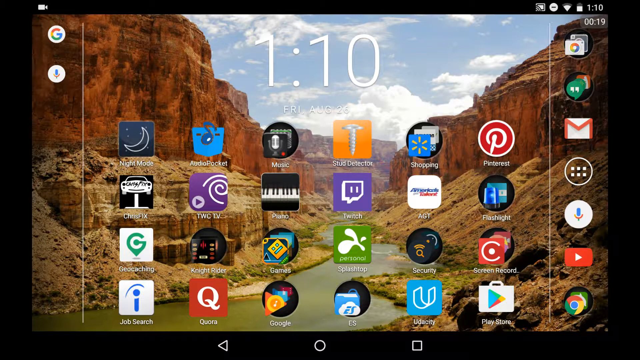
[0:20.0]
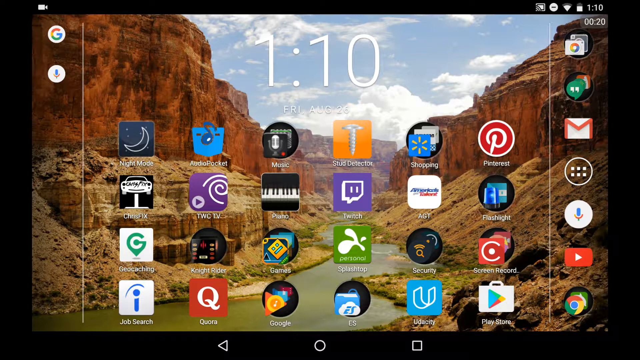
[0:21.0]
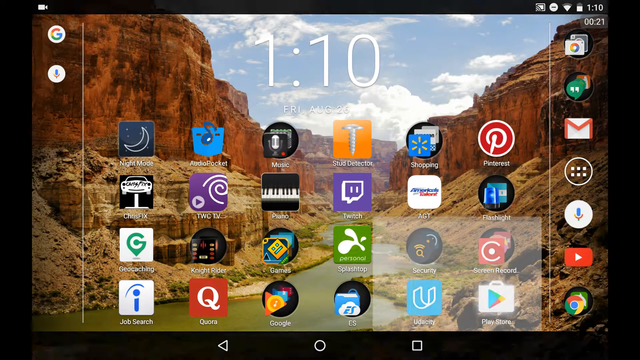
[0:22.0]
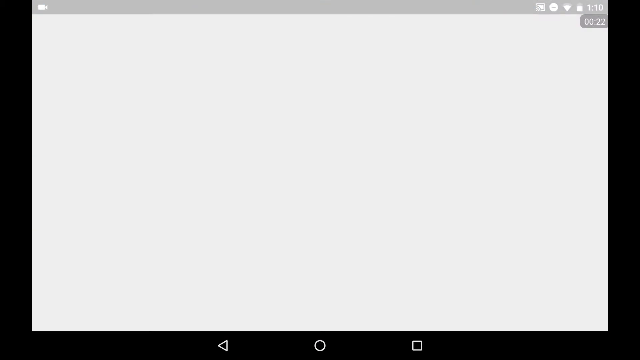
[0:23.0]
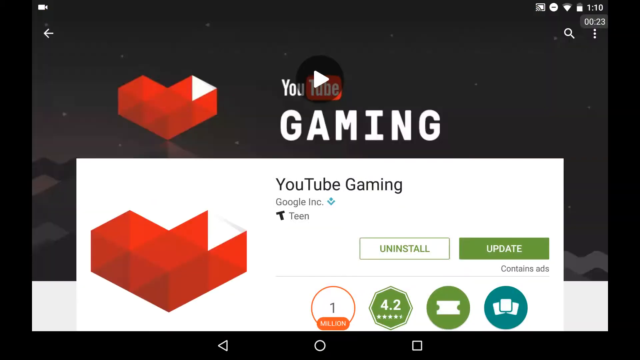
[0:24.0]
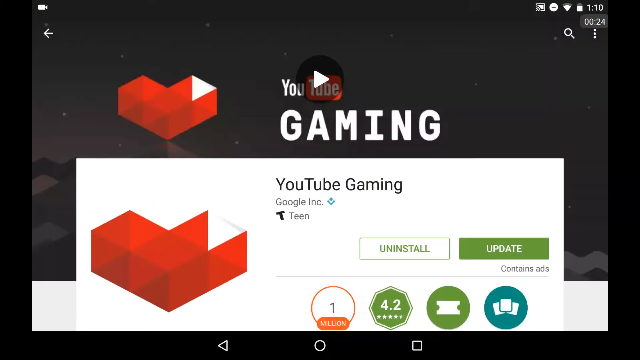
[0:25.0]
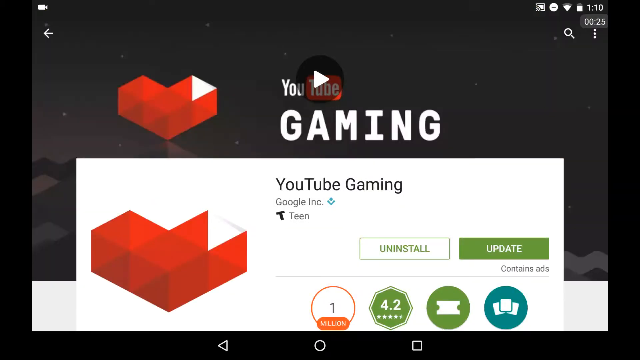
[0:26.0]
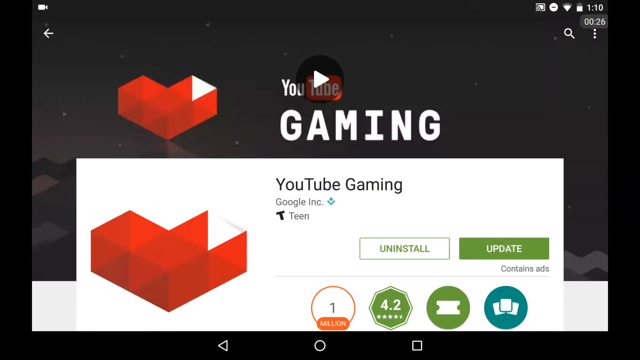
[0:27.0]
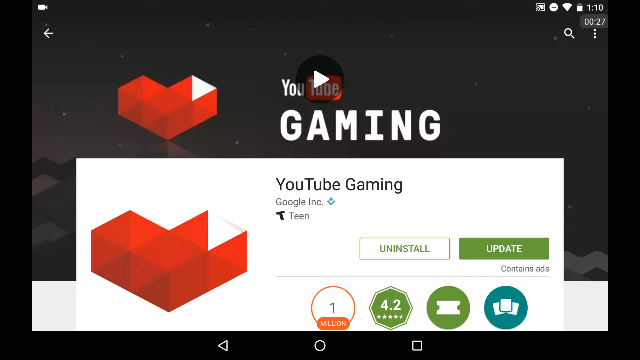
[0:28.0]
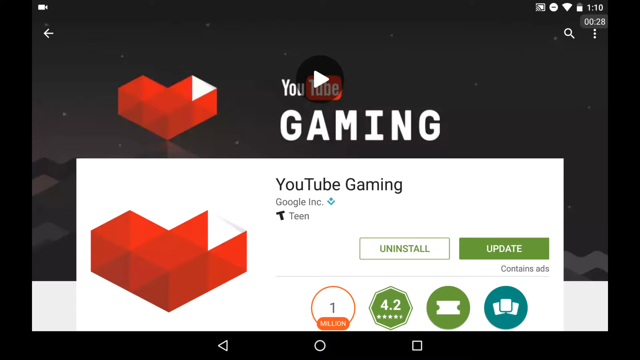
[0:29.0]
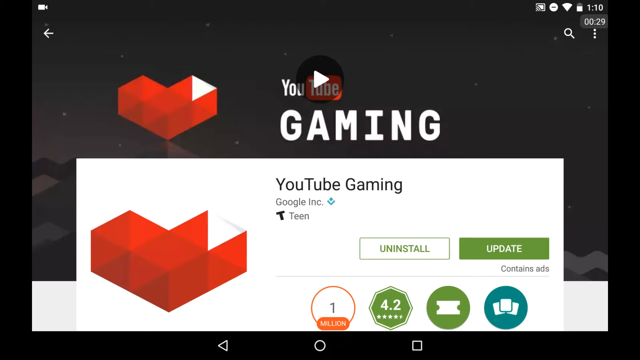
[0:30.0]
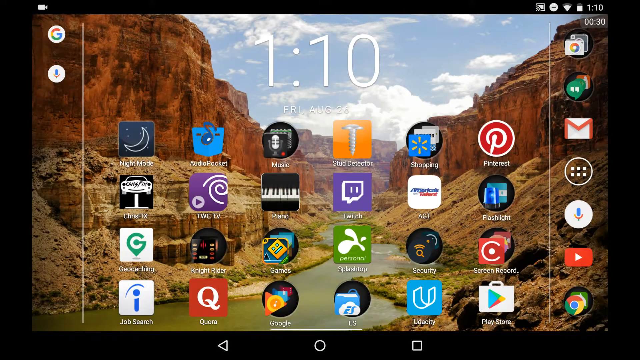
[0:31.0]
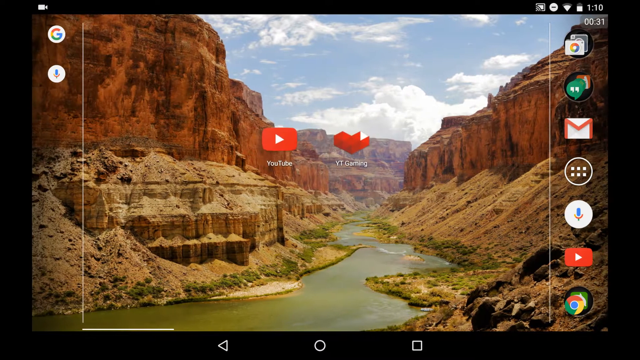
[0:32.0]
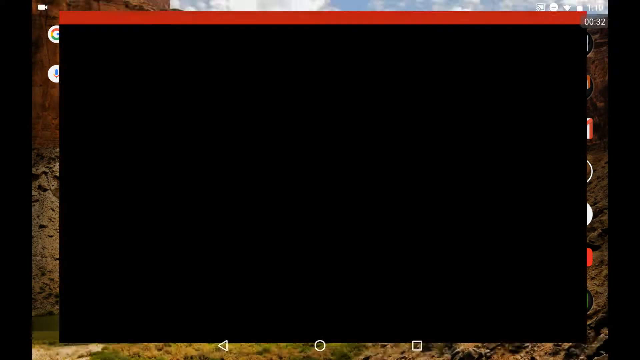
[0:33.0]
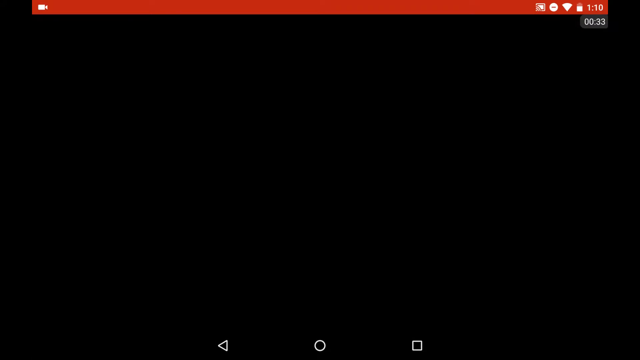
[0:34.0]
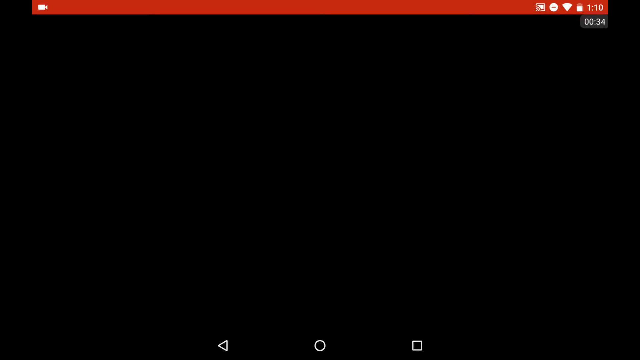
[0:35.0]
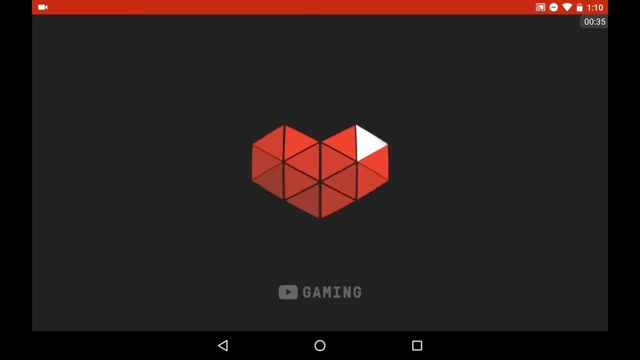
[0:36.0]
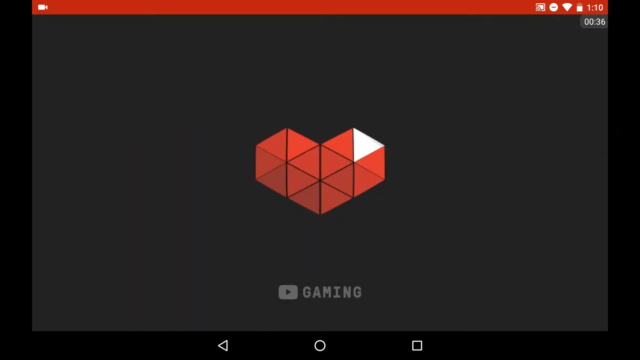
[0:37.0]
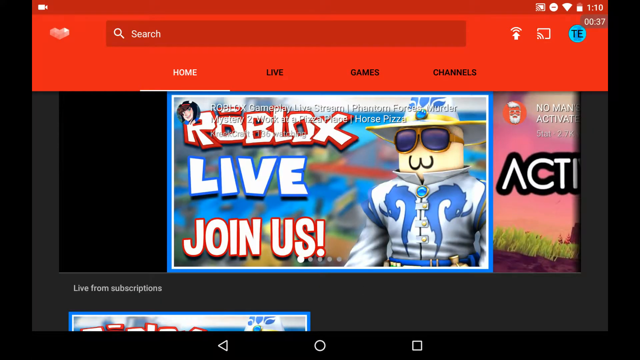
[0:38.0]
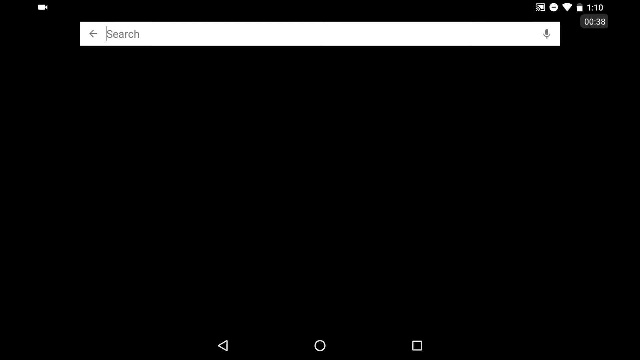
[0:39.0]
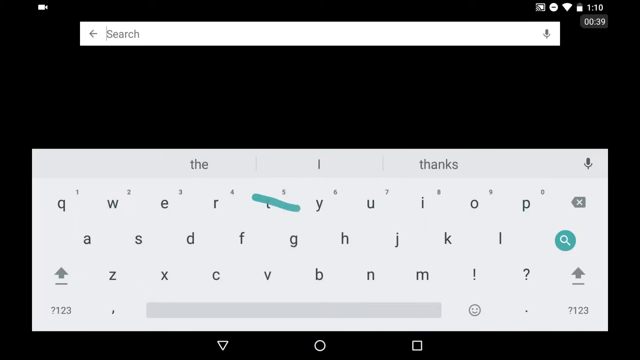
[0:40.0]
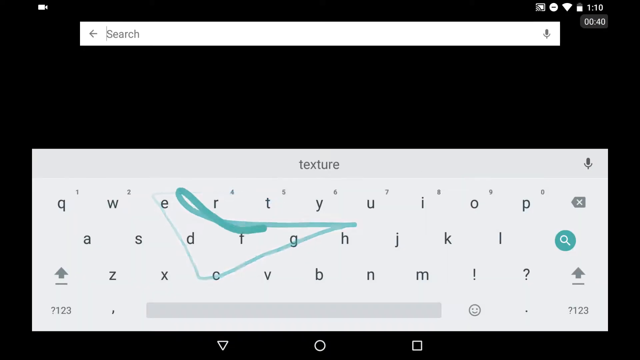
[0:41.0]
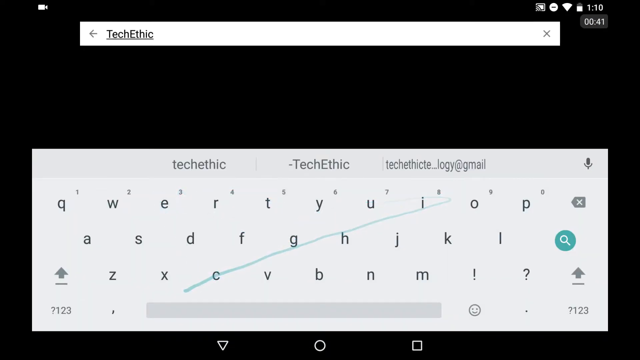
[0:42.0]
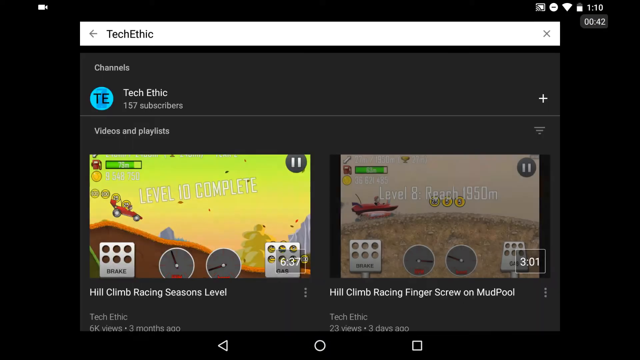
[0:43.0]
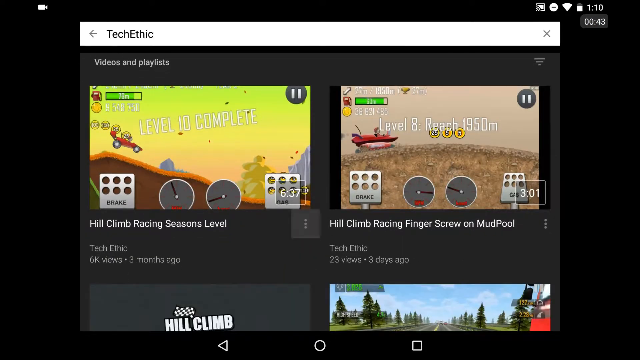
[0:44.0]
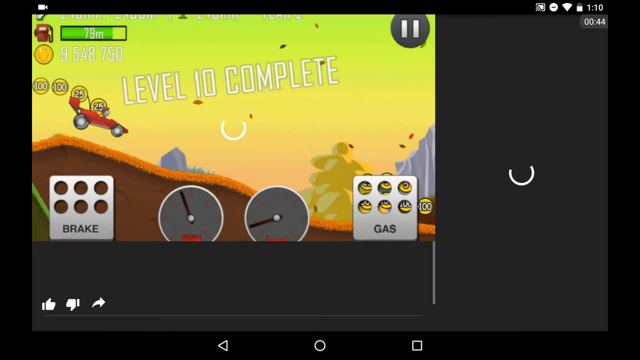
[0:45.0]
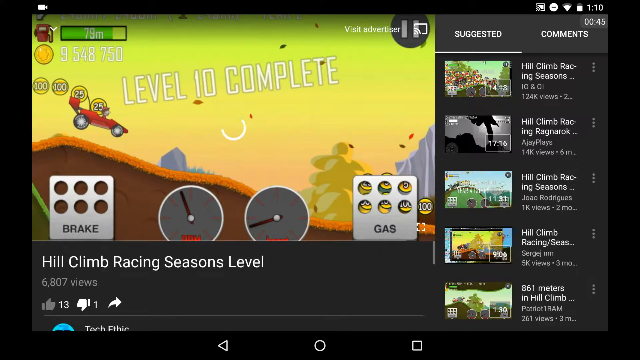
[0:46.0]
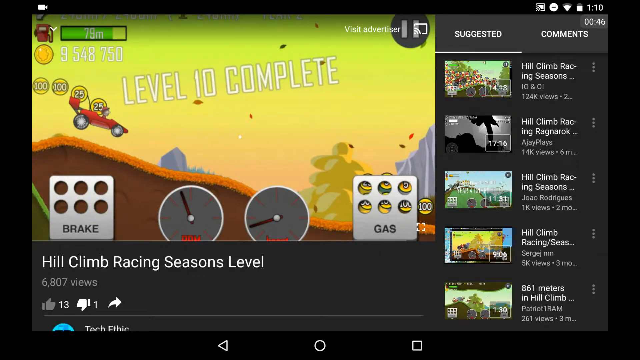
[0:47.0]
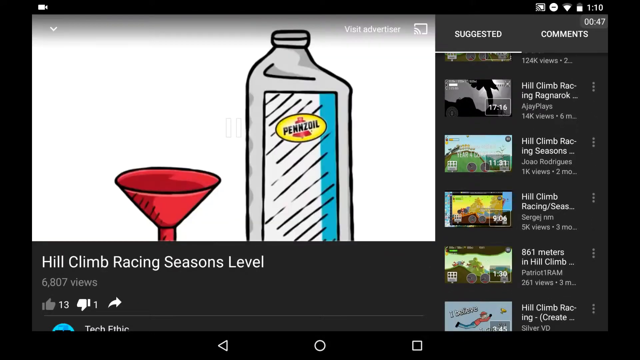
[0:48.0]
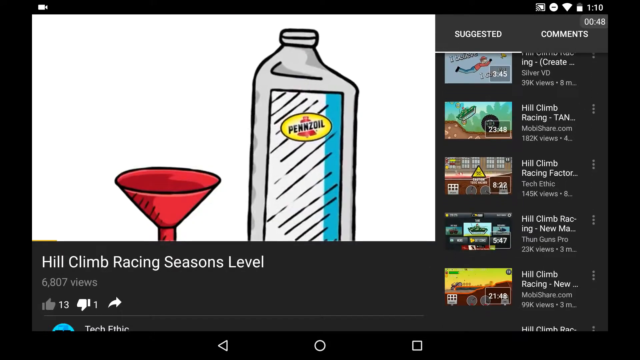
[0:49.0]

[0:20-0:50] The user is on the home screen dashboard of their device. They click a Google Play icon in the bottom right of the home screen, which opens the Google Play Store. The user toggles the YouTube gaming app, which offers options to uninstall or update. After staying on this screen for a while, the user closes it, scrolls back over on the home screen, and selects the YouTube icon. YouTube Gaming opens with a loading screen showing a pulsing red heart. The user navigates to the YouTube search bar and types in TechEthic as one word, which produces results for hill climb racing simulators. The user clicks on Hill Climb Racing Seasons Level, which brings up a screen with a red race car angled downhill on a dirt path. There is a brake pedal on the bottom left of the screen, a gas pedal on the bottom right, and an RPM and speed gauge between the two pedals.